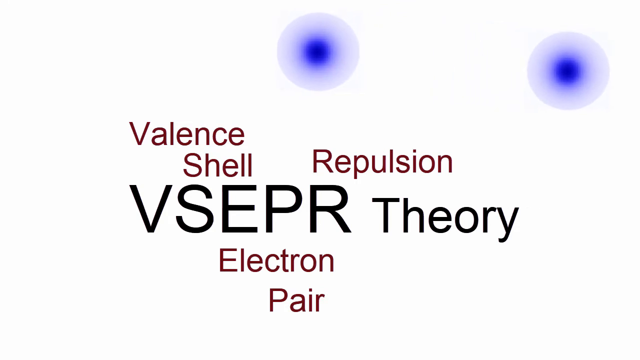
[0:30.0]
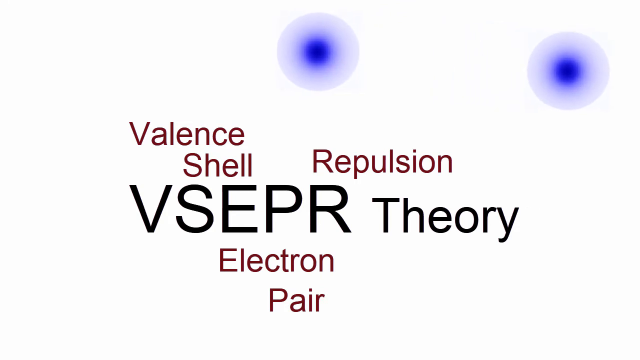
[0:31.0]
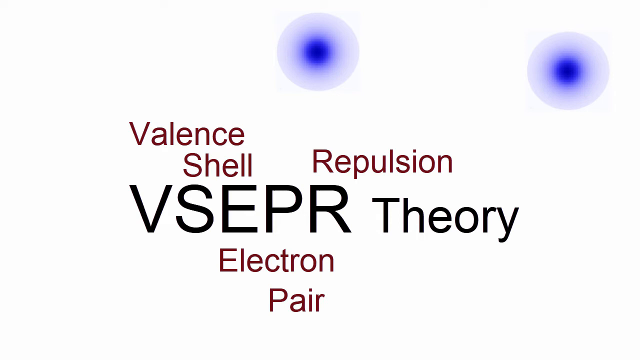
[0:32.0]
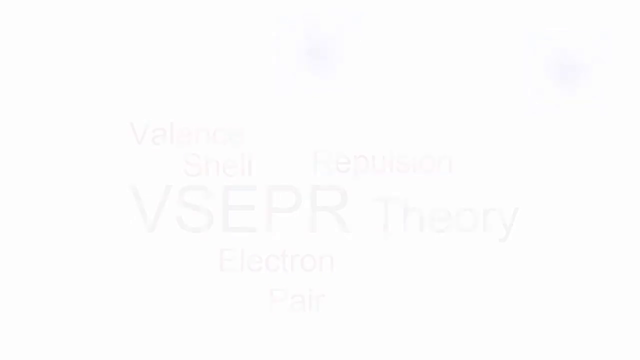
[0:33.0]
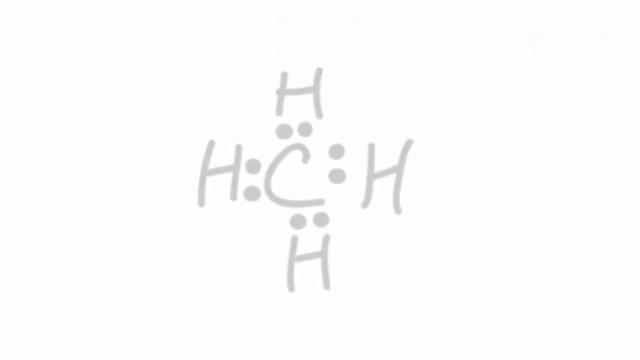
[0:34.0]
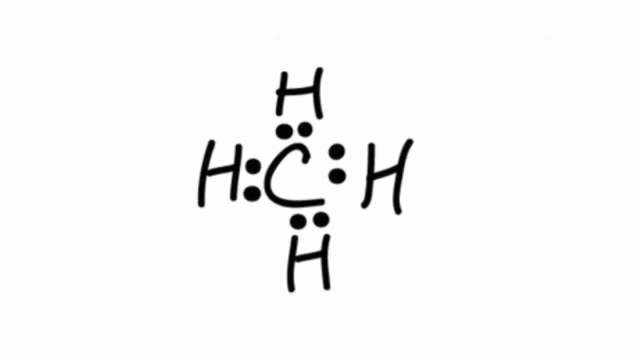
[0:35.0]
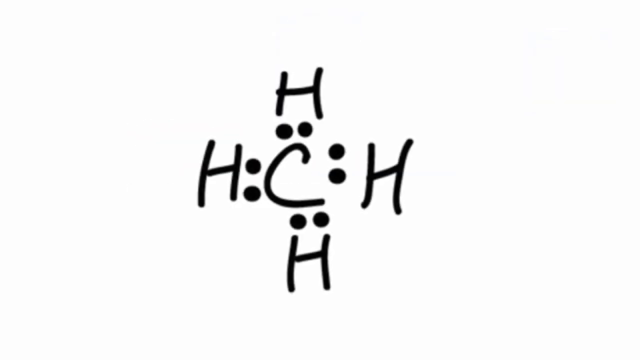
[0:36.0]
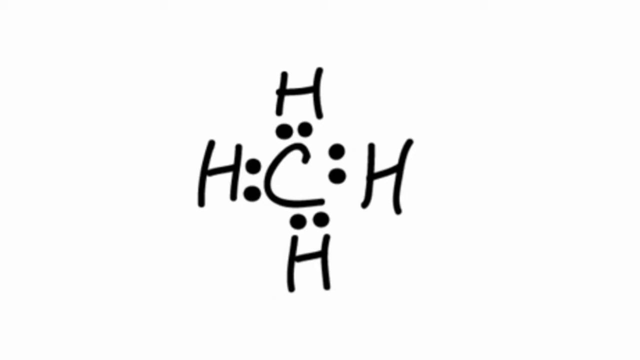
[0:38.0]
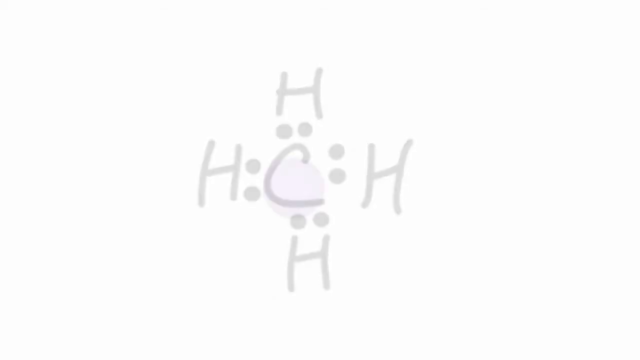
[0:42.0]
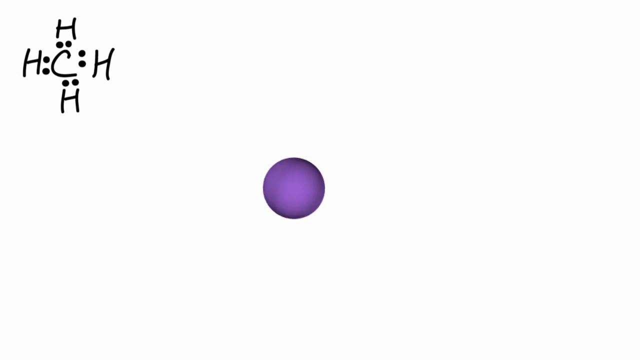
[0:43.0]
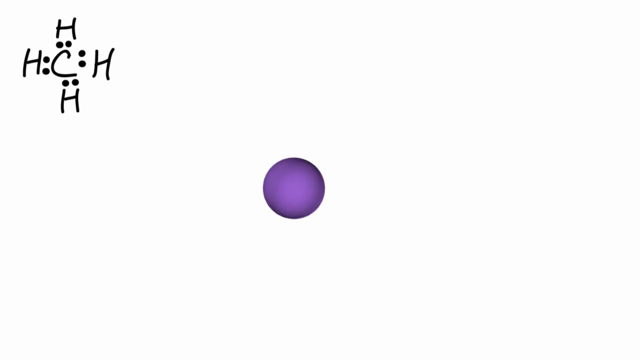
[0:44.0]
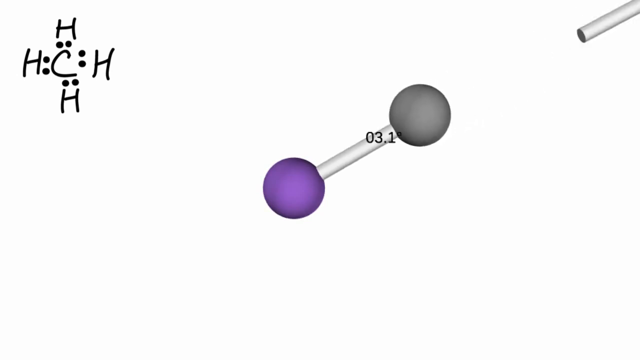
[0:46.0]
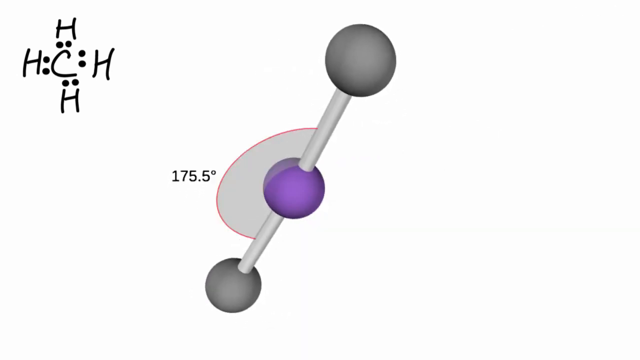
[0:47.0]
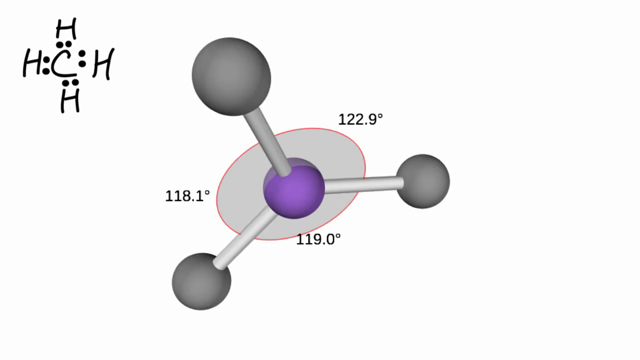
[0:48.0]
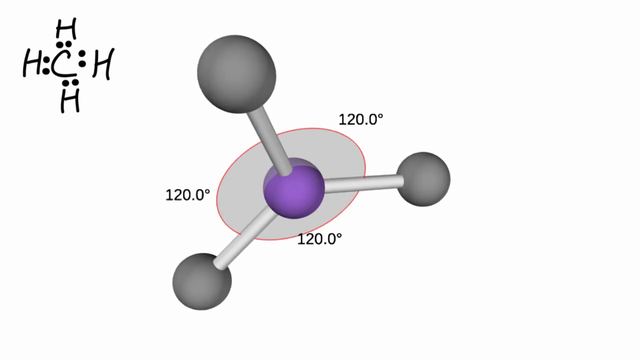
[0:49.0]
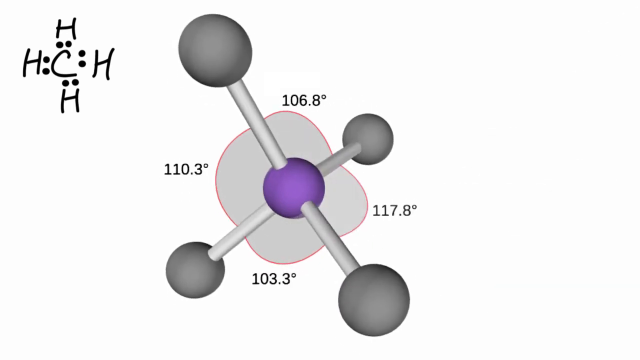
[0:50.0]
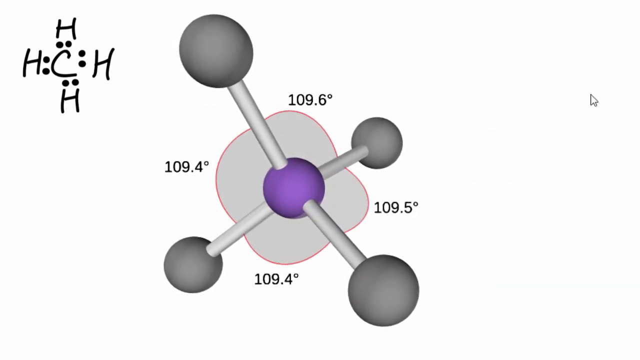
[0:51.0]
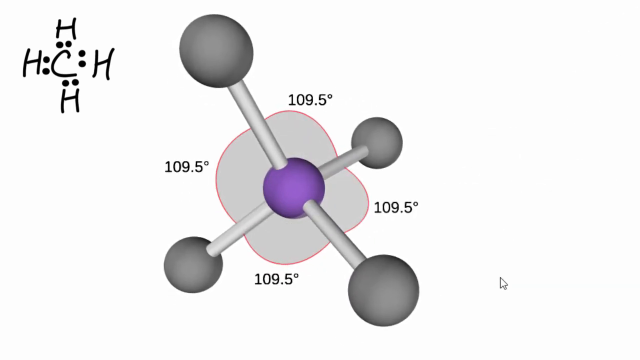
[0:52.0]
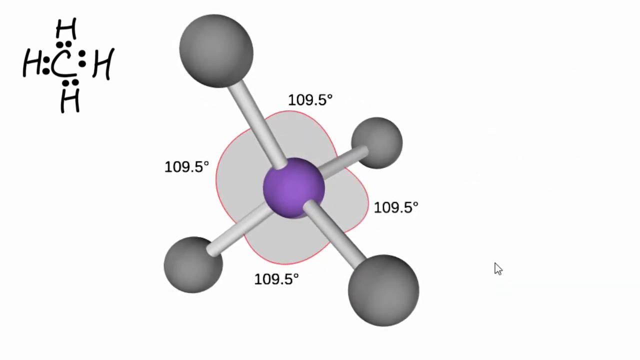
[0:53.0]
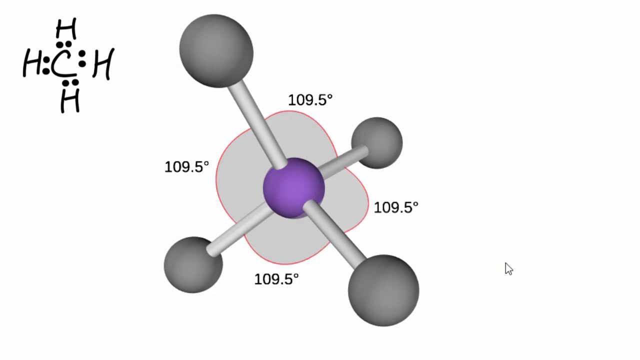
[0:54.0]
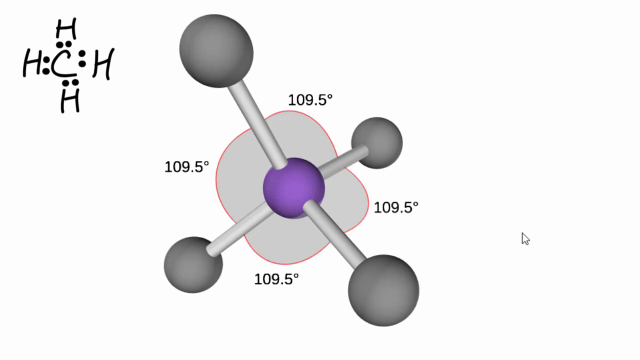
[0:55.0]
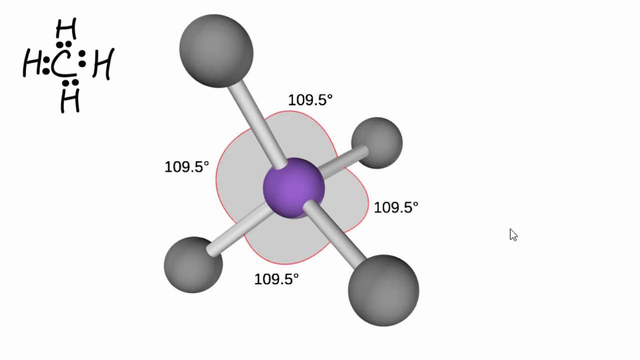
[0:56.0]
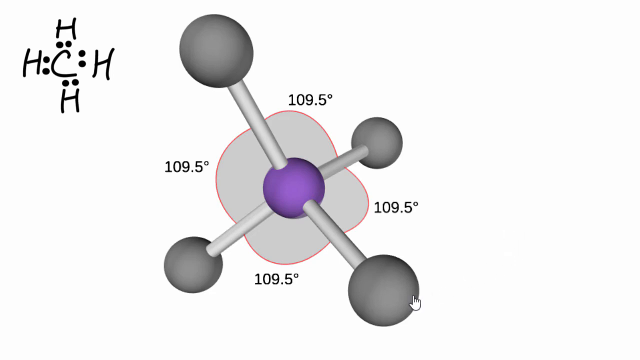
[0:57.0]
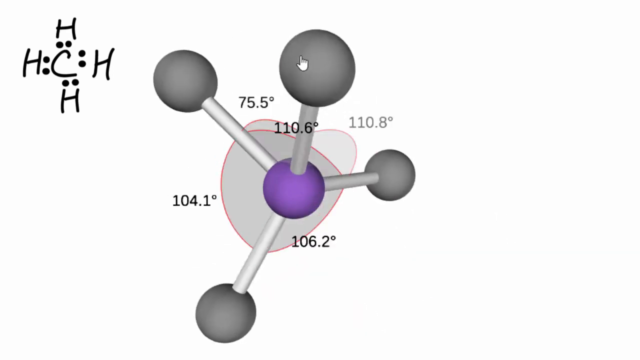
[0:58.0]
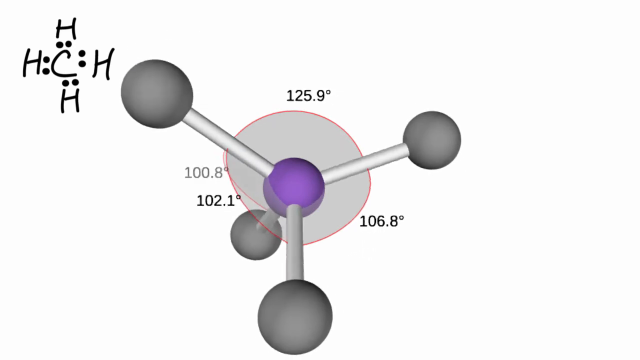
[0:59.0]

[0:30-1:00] After the repulsion atoms disappear, a Lewis dot structure of a methane molecule, CH4, appears: a central carbon atom surrounded by four hydrogen atoms. Each carbon-hydrogen single bond is represented by two dots for two electrons, so the carbon atom is completely encircled by four pairs, or eight electrons, and each hydrogen atom has a filled valence shell of two electrons. The Lewis dot structure fades away and is replaced by a single purple sphere representing the carbon atom. The four hydrogens bond to it one after another, each hydrogen a gray ball and each bond a light gray cylinder, kind of flying in. First one hydrogen bond appears, then a second, giving a straight molecule; when the third appears, the molecule is triangular. The angle between the bonds is shown and flexes as each new bond forms. The animation kind of pauses at the incomplete three-hydrogen triangular stage as the bond angles equalize at 120 degrees each. Once they equalize, the fourth and final hydrogen flies in. The model is now three-dimensional but is shown two-dimensionally. The bonds kind of wobble around a little before equalizing at 109.5 degrees each. A cursor then appears, indicating that someone off screen is manipulating the model. The cursor clicks and drags one of the hydrogen atoms, rotating the entire molecule; this drags the bonds out of formation, but they quickly re-equalize at 109.5 degrees.